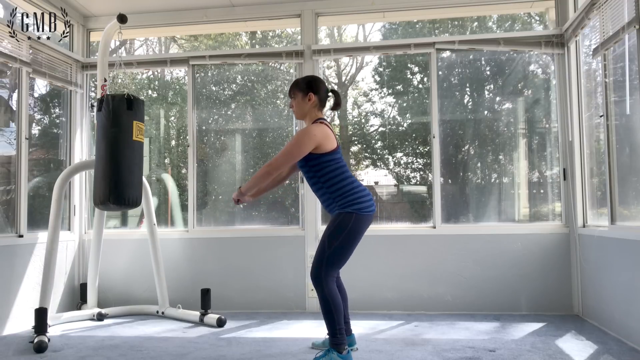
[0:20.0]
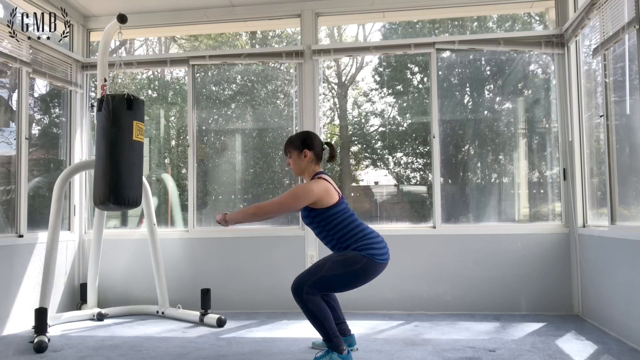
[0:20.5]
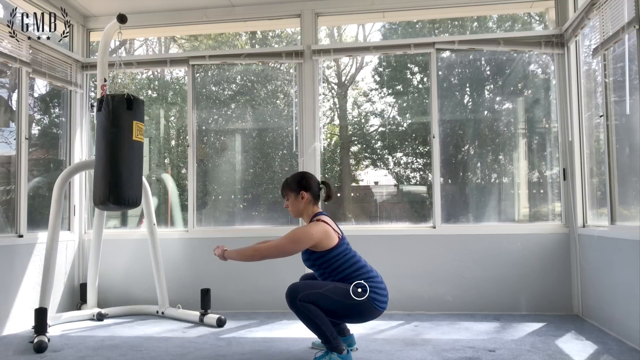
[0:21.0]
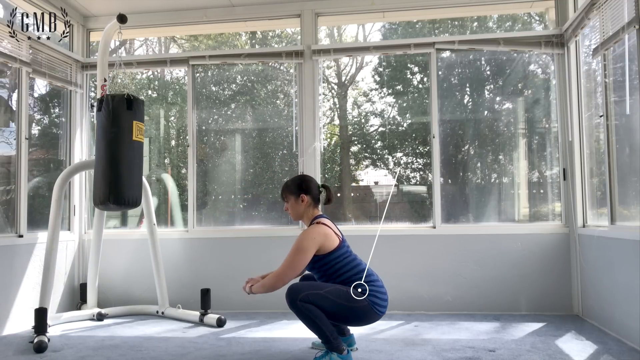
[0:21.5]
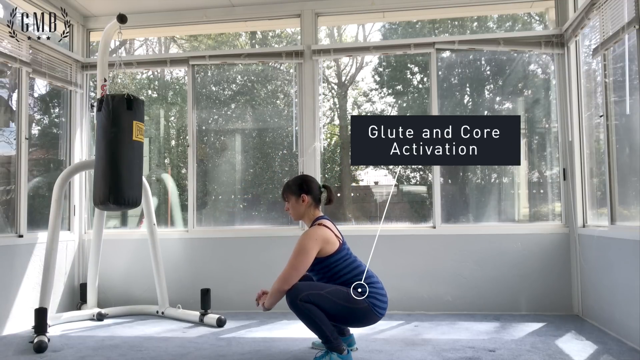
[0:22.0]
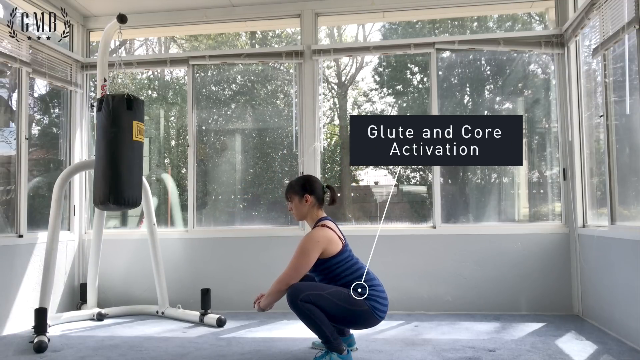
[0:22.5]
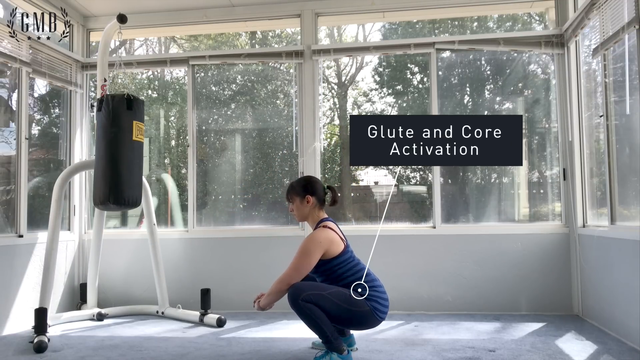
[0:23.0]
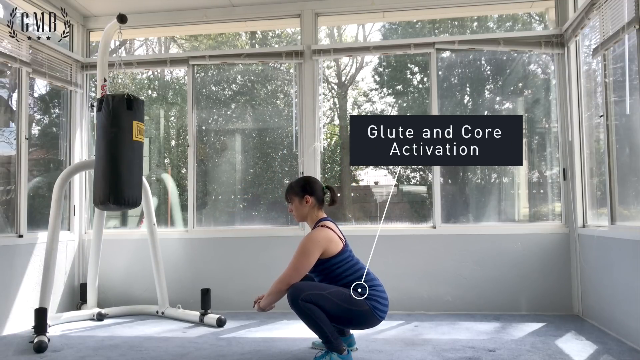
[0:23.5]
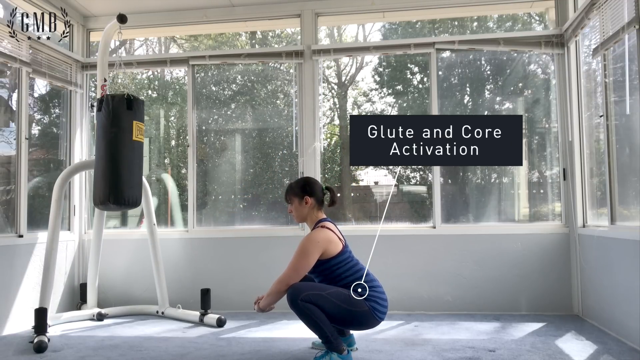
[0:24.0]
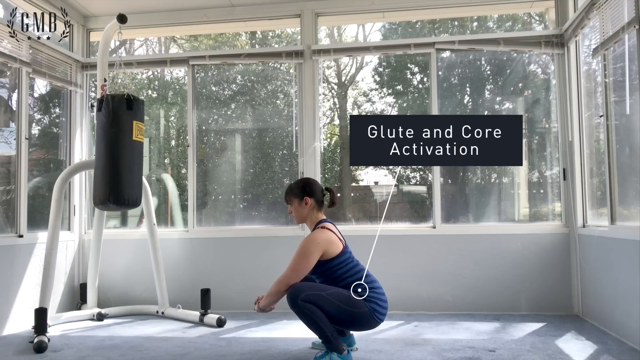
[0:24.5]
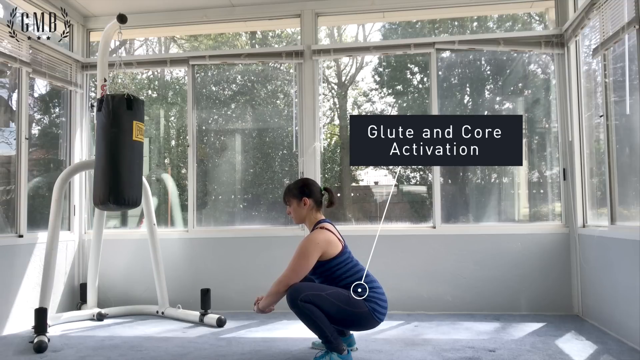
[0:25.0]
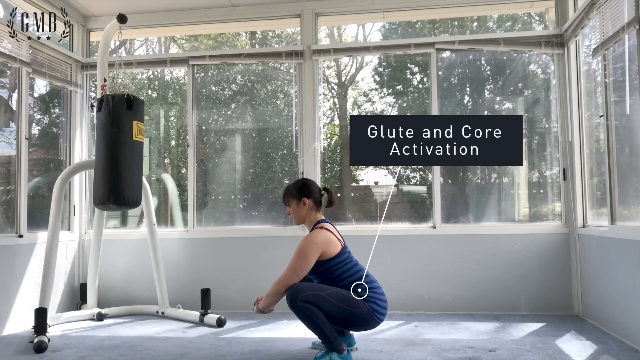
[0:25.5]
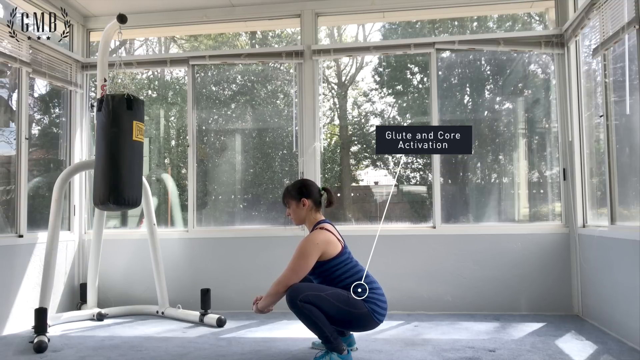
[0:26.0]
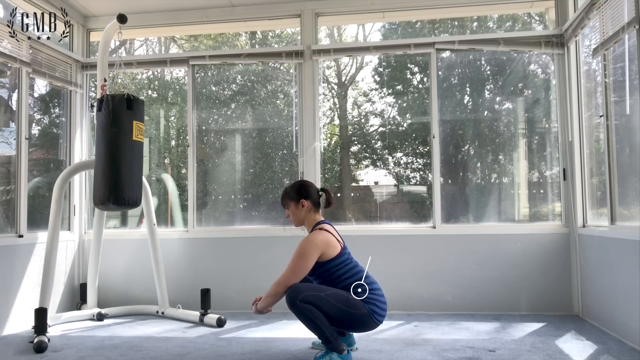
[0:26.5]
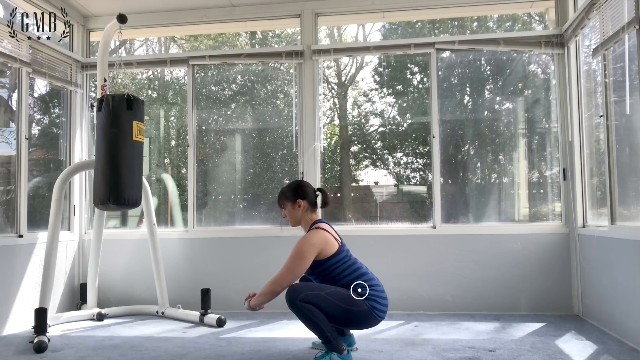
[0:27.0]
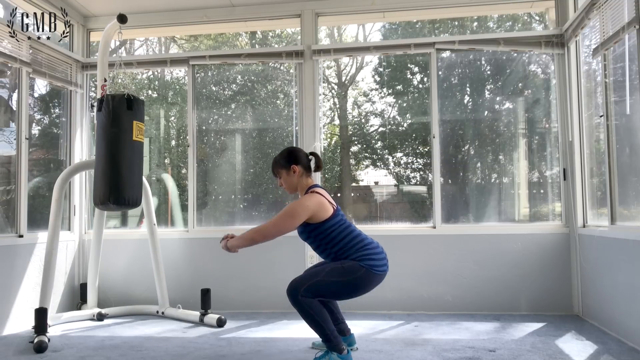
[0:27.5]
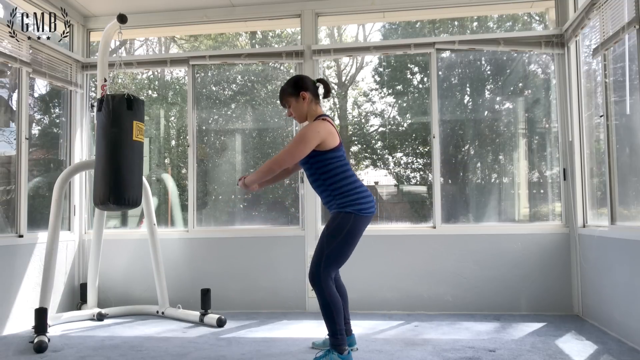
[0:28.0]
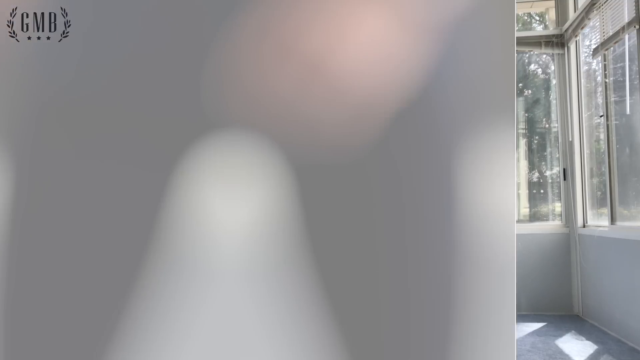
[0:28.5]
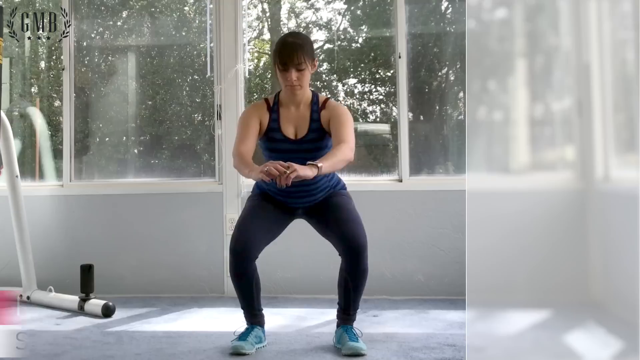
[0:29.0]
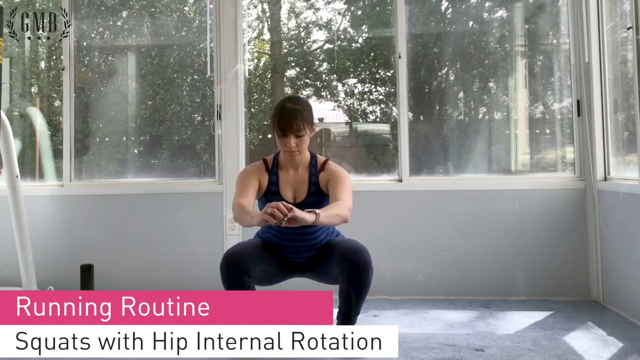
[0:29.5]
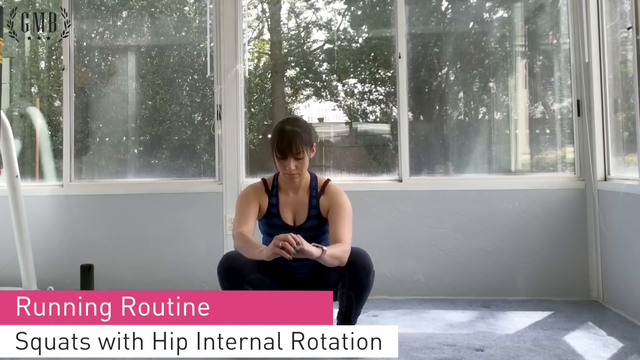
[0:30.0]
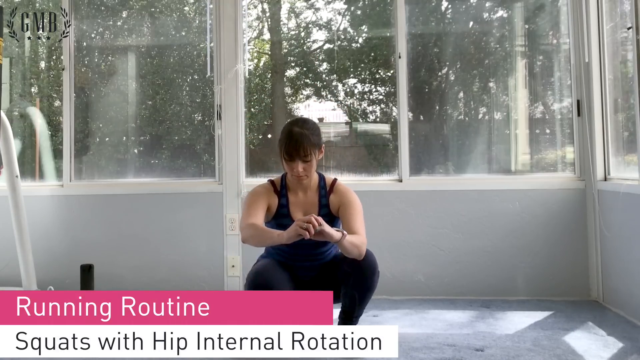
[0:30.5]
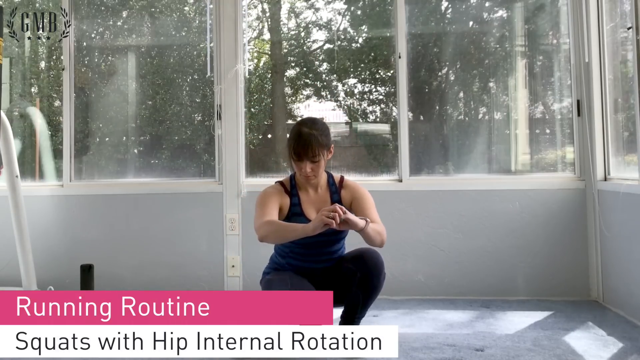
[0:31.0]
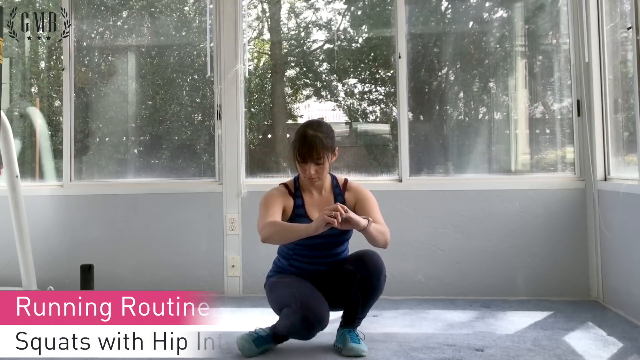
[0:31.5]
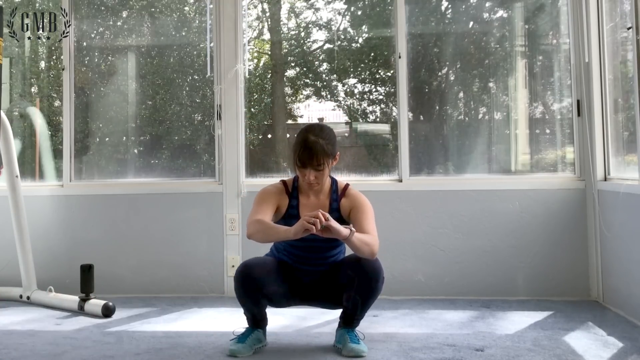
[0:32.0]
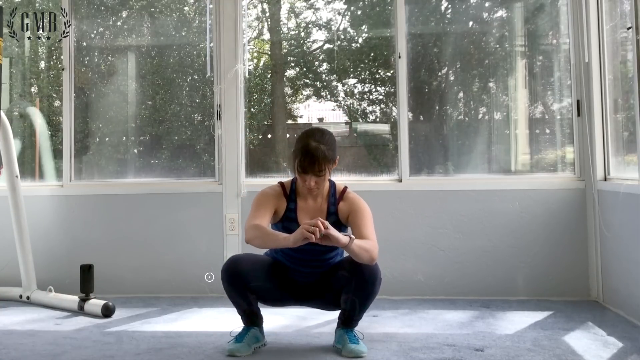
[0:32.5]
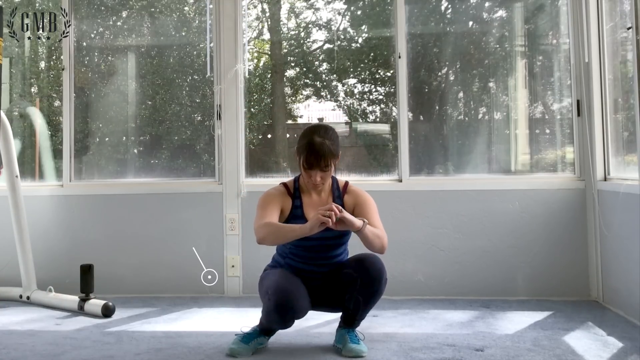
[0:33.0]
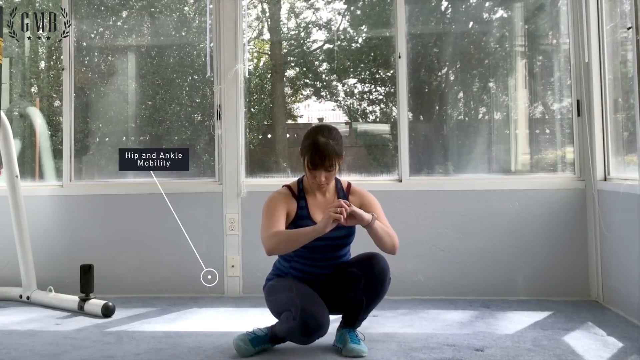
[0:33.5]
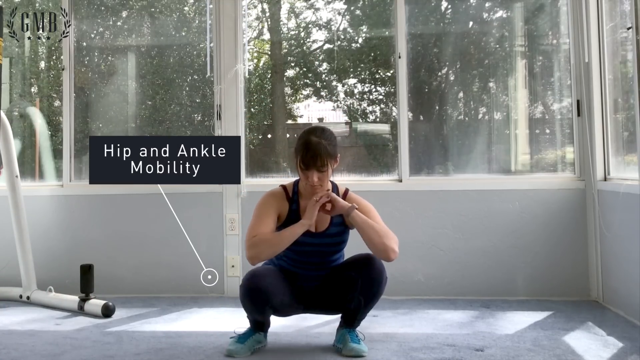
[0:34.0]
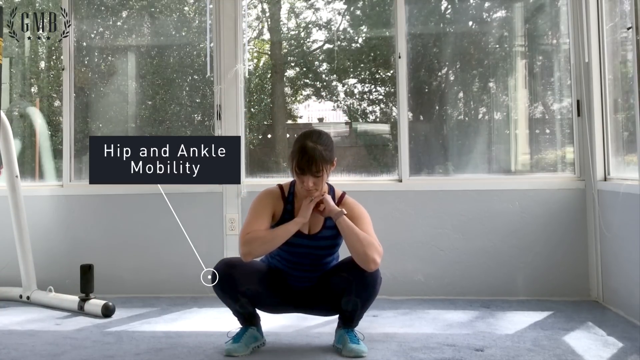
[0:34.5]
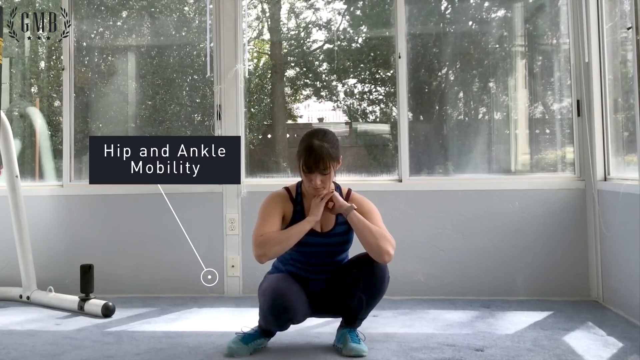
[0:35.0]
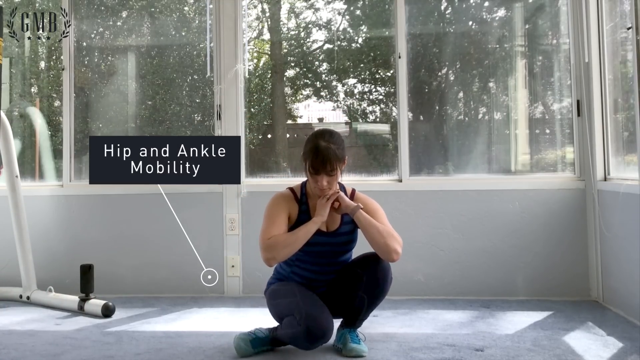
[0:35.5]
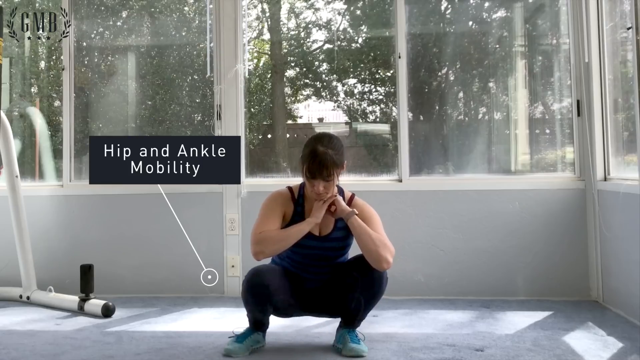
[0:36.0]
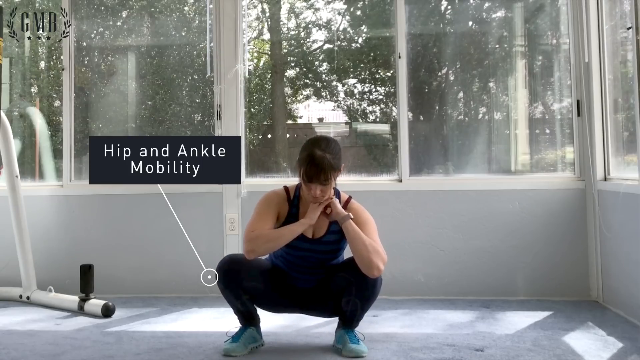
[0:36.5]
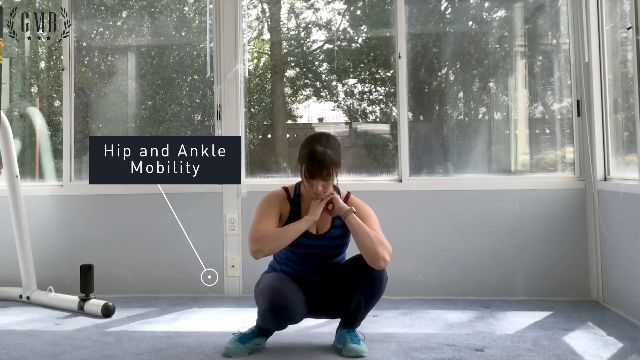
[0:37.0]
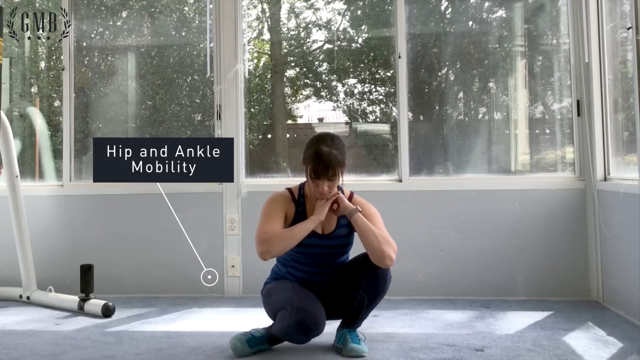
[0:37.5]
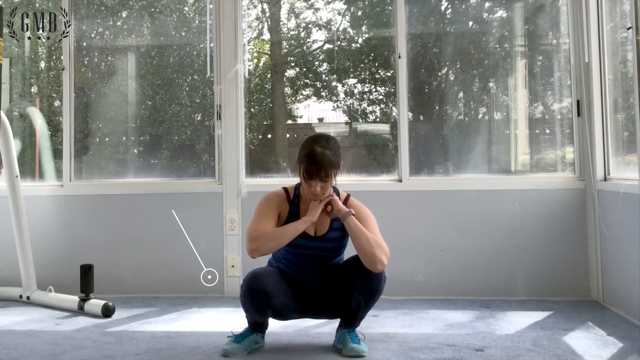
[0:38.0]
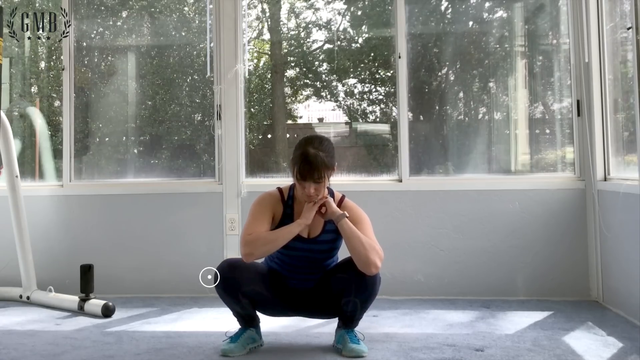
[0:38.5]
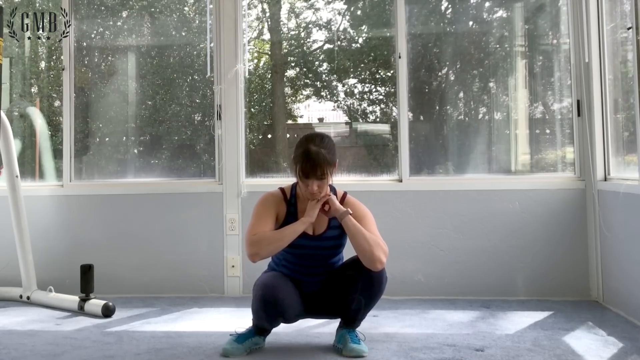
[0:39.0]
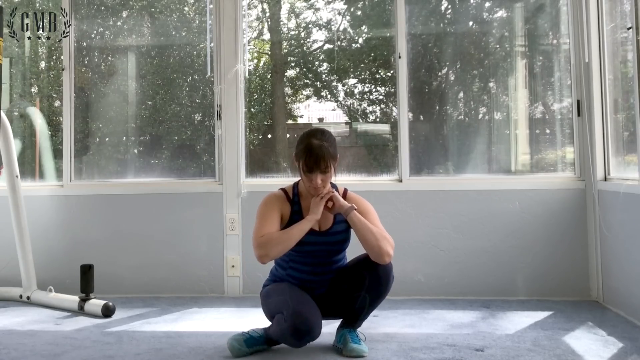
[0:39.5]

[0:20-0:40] The woman stands slightly hunched over, facing toward the left, with her hands out in front of her. She wears a blue tank top with black stripes and very tight blue pants, in a room with windows all around. She squats down until her hips are horizontal with the window frames, her arms sticking straight out in front of her and her knees bending very tightly, then goes down a little further. A white dot with a circle around it appears near her hips, and a line comes up from it to a pop-up that says "glute and core activation." She stays down for a little while, shakes around a little, and then stands back up straight. A banner pops up from the left side that says "running routine." Then, squatting, she pushes her right knee toward the left side while looking down at it, her hands still clasped together in front of her chest. She puts the knee back to the right, then goes back in again. Another circle pops up on the right side of the screen, with a white line at the end of a white dot, and at the top a rectangle comes up that says "hip and ankle mobility." Meanwhile her leg keeps moving back and forth in front of her as she squats. She then puts her hands underneath her chin.